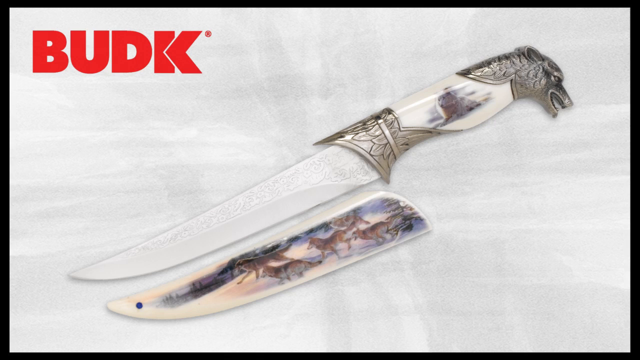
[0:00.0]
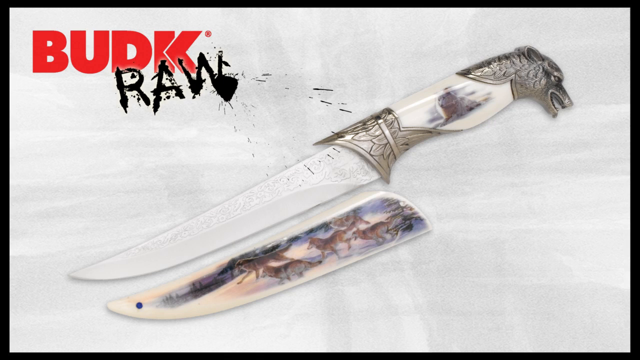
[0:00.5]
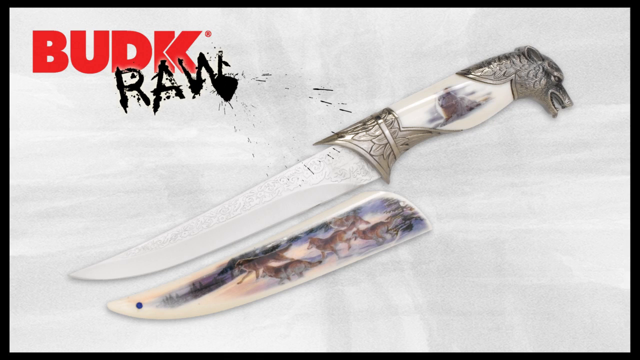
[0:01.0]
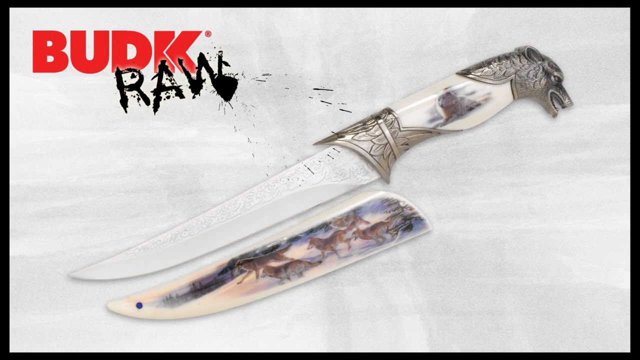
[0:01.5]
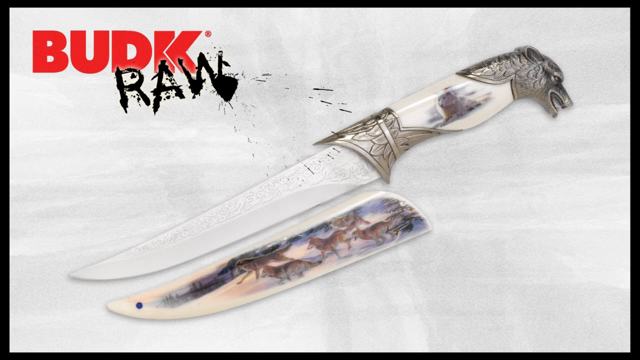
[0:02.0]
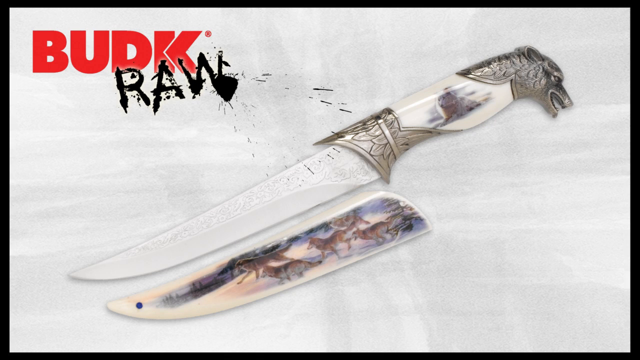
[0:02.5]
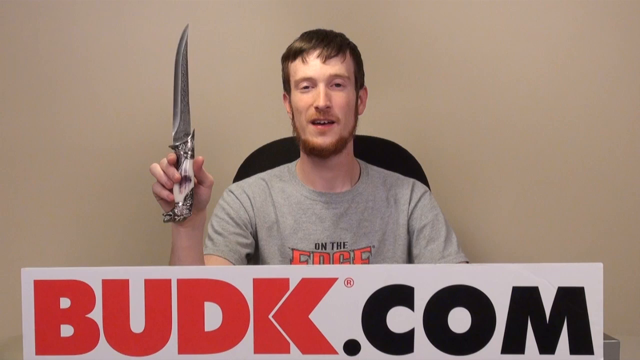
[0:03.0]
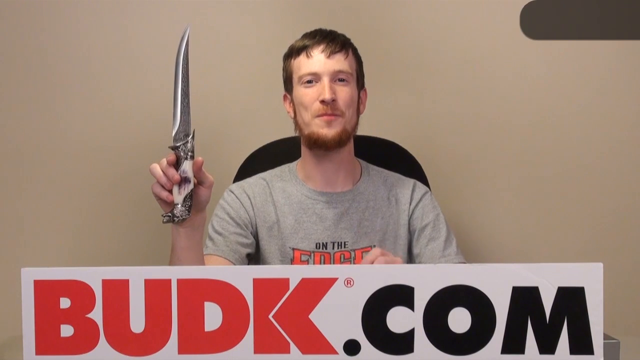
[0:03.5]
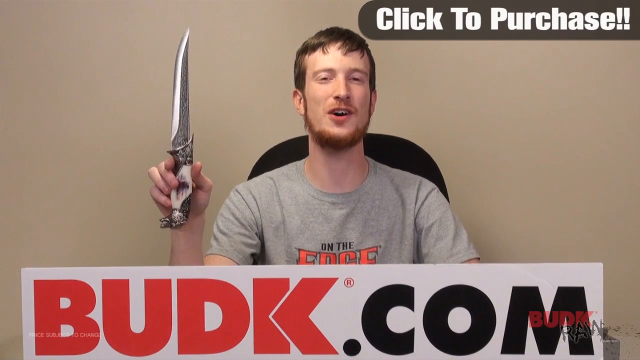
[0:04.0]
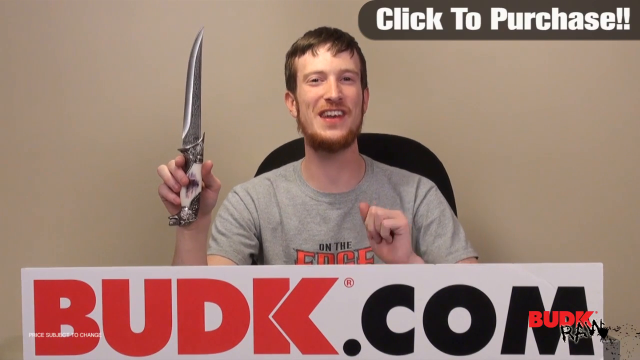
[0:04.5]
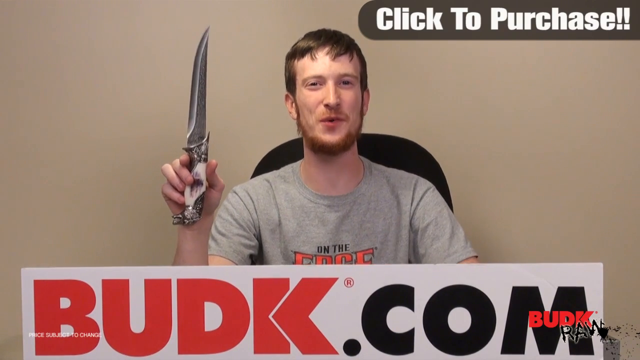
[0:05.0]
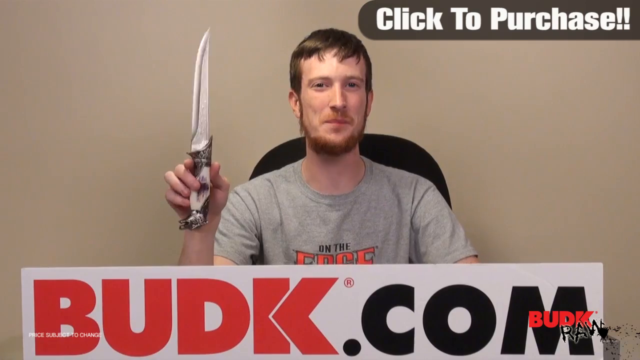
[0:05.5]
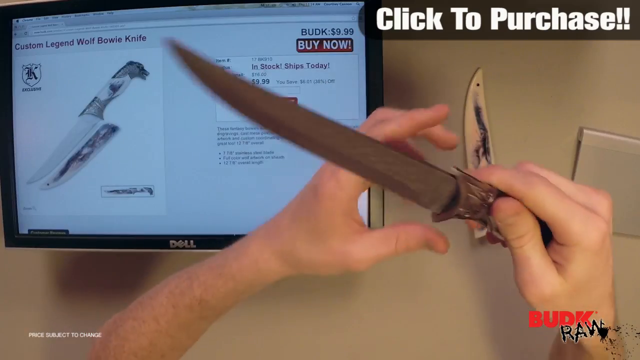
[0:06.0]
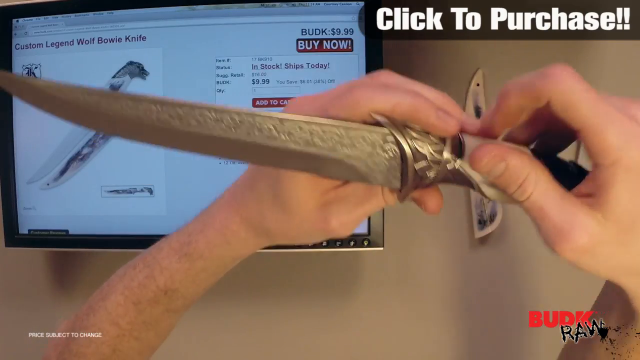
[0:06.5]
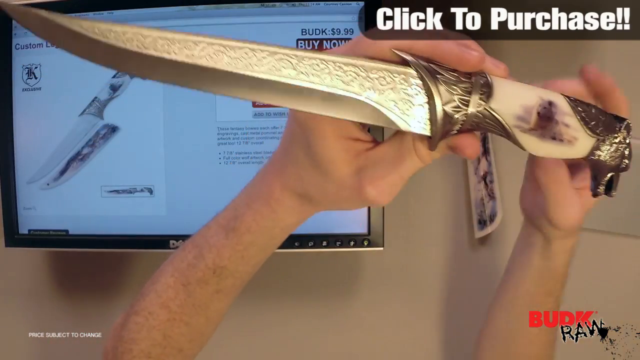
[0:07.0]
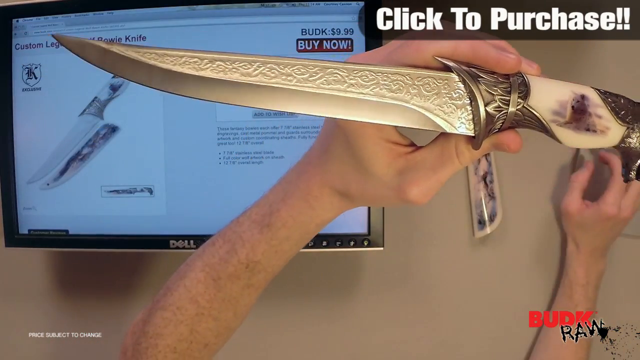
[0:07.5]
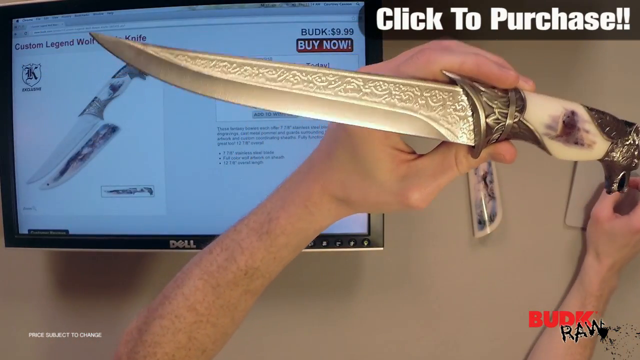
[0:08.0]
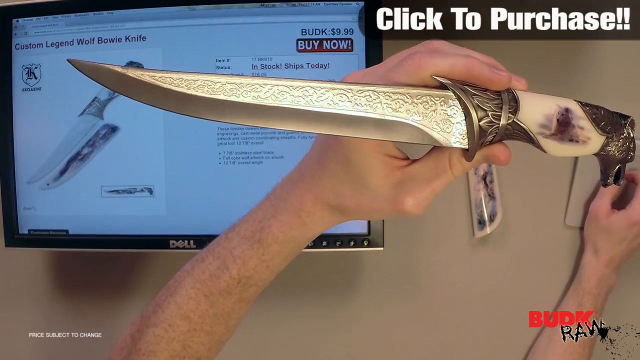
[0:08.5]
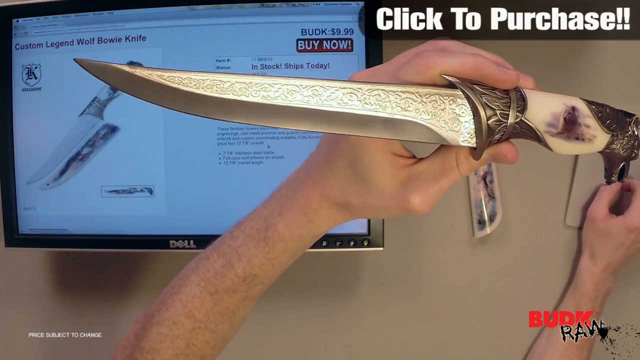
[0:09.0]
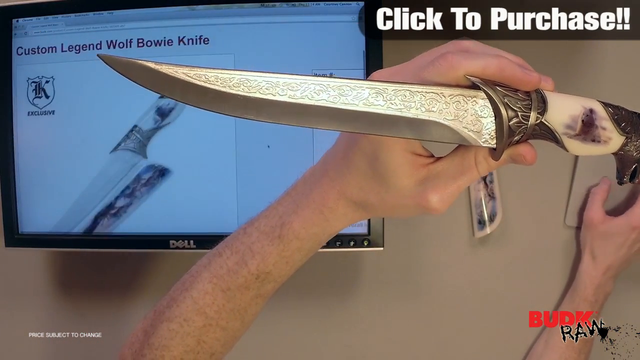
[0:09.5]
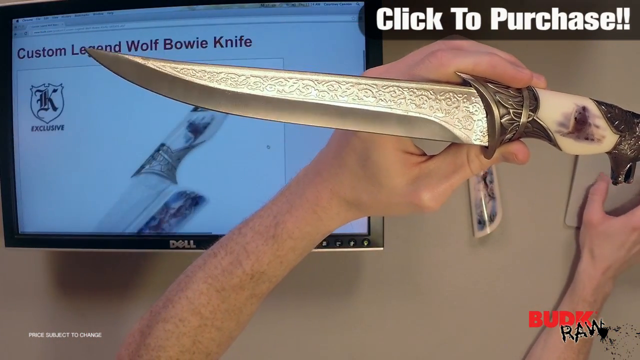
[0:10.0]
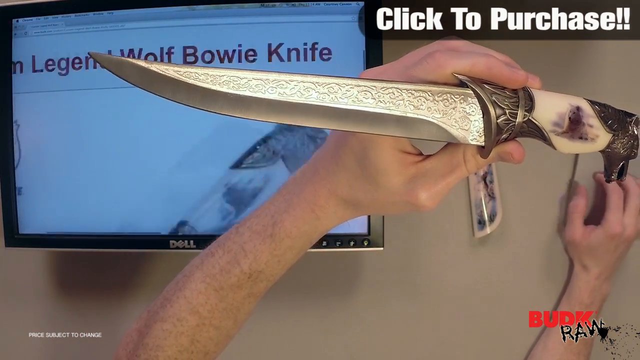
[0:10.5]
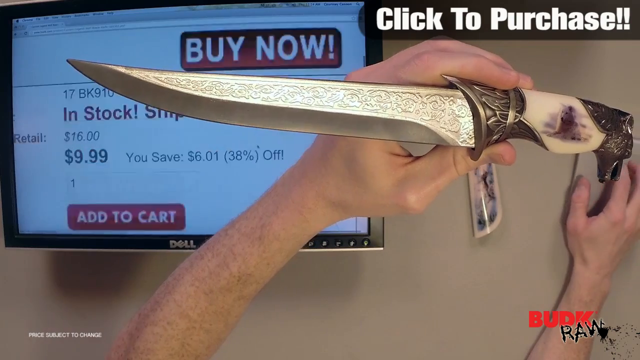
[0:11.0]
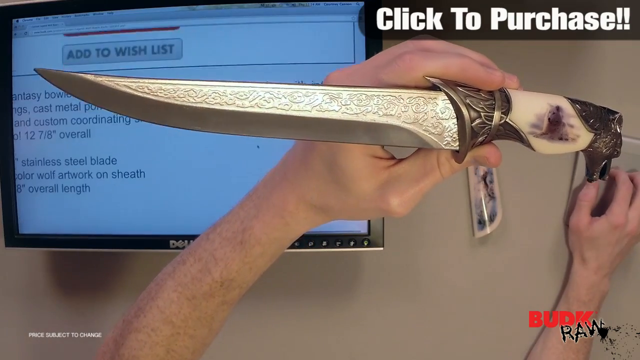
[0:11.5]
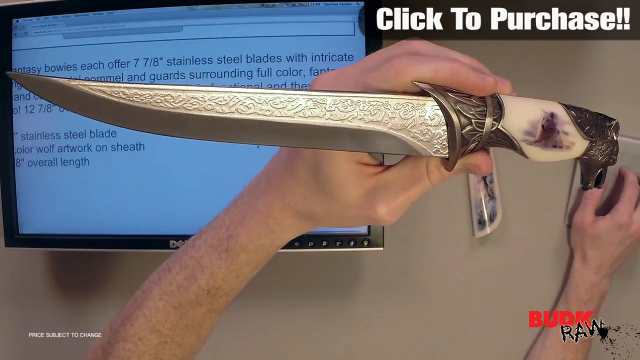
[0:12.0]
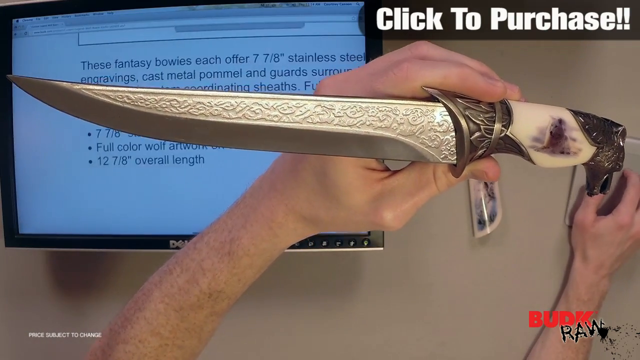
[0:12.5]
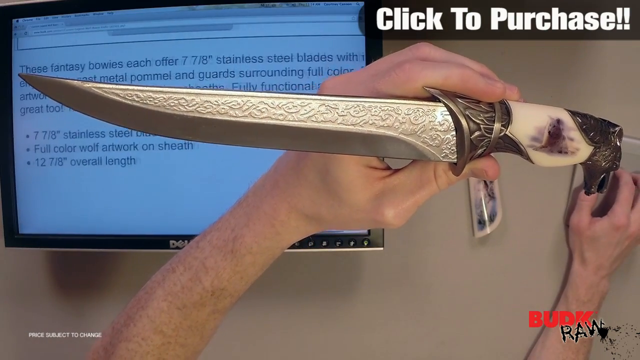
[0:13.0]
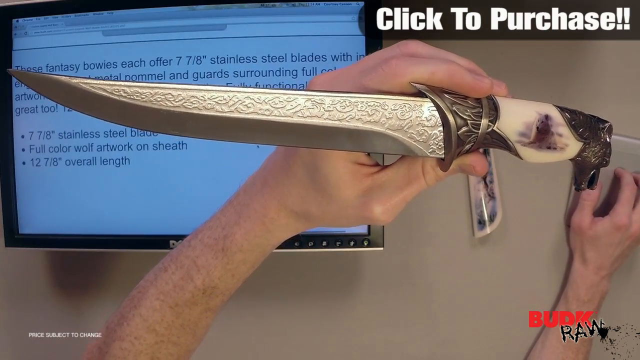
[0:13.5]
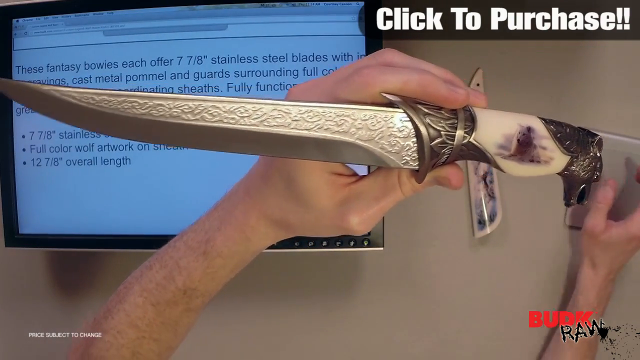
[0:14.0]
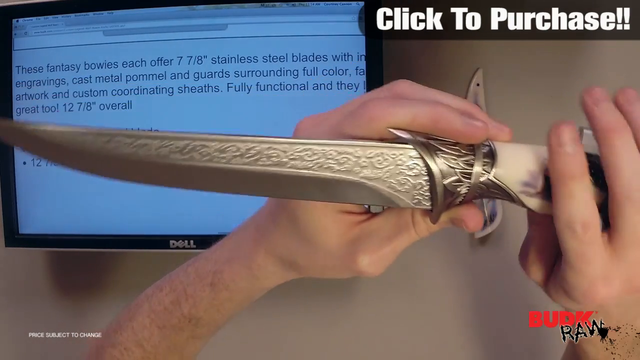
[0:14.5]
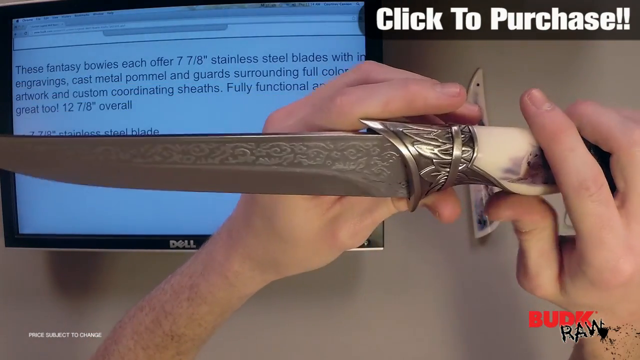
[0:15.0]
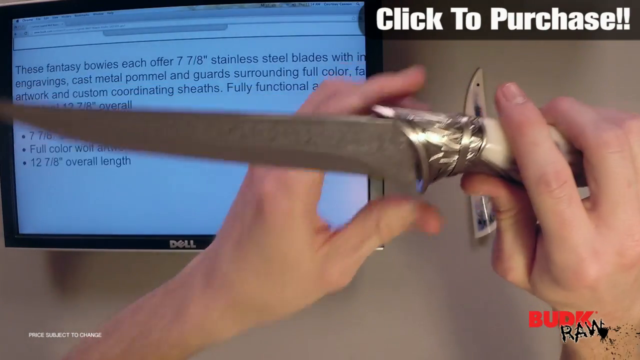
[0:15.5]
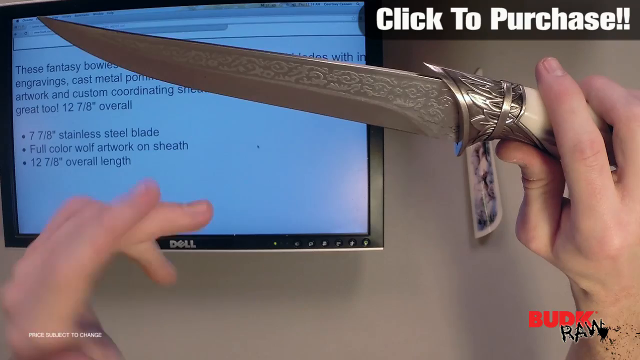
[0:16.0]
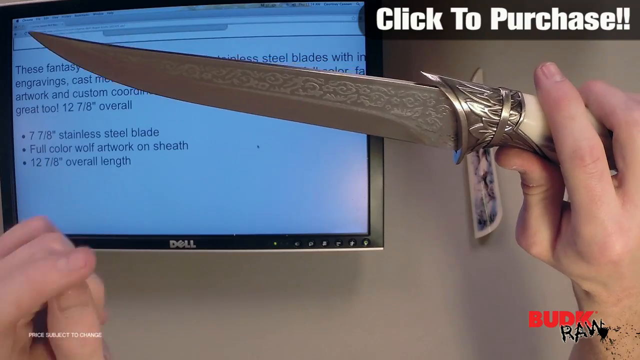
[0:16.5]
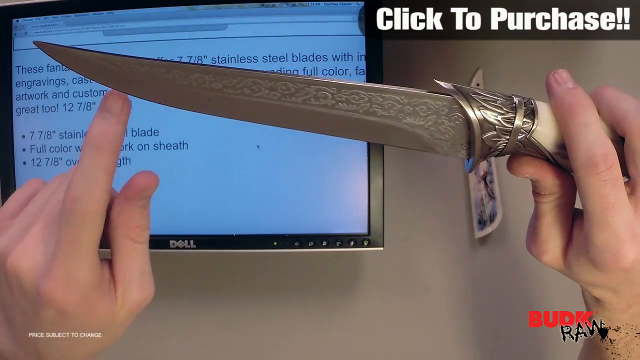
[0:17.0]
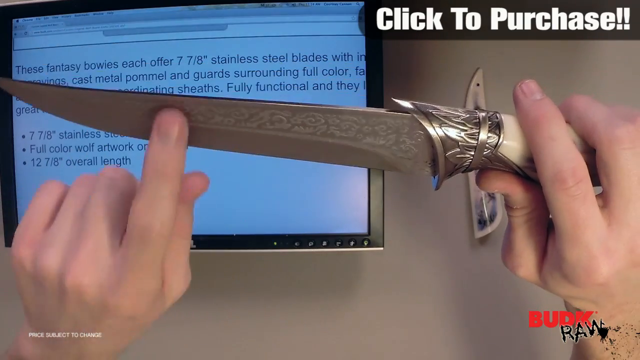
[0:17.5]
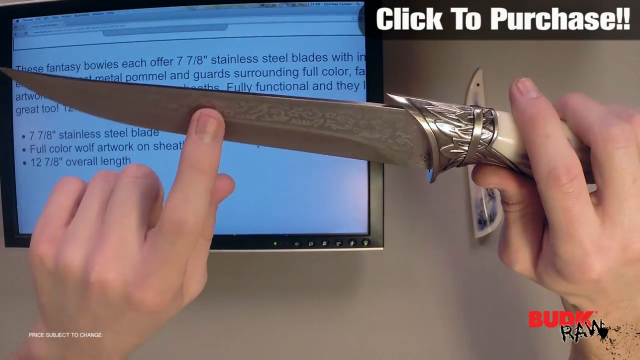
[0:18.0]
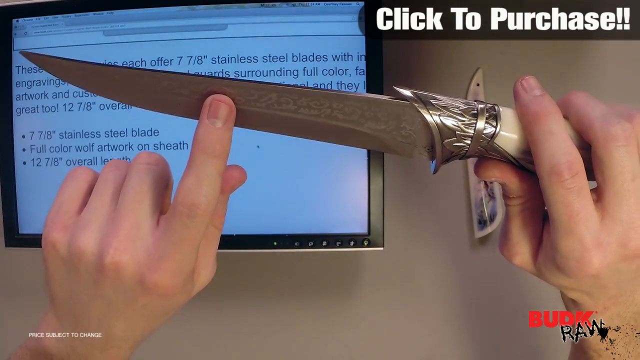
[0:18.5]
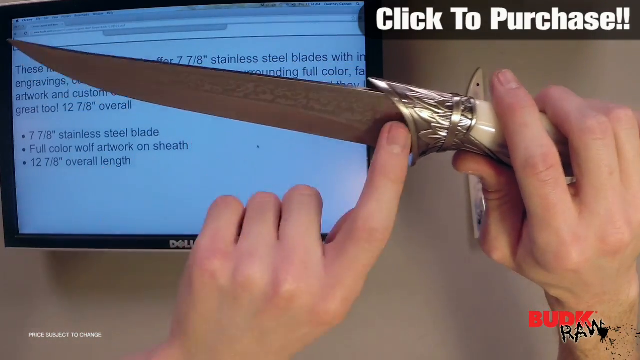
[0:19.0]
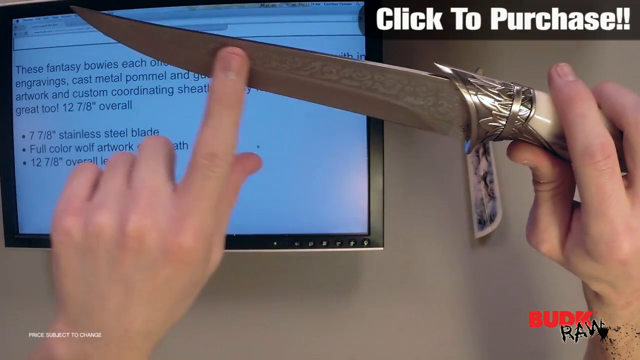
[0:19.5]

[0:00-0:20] An image shows a knife or sword with a BUDK design; the knife has what looks more like a wolf head at the back. A young white man with a beard, apparently the presenter or video maker, shows the knife and goes through its features. On-screen text reads "click to purchase," along with information including "stainless steel blade," "full color wolf artwork" and "seven and eight inch overall length."